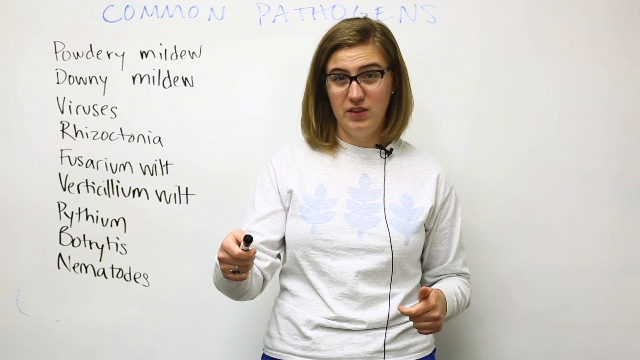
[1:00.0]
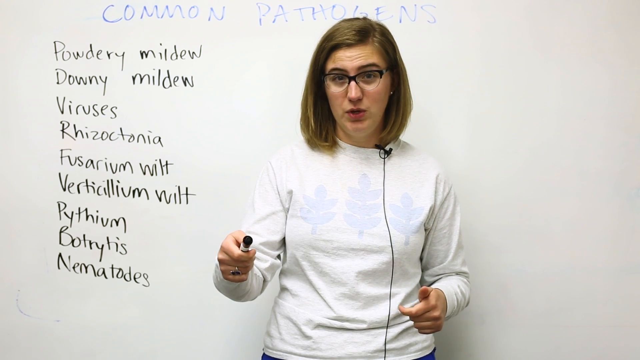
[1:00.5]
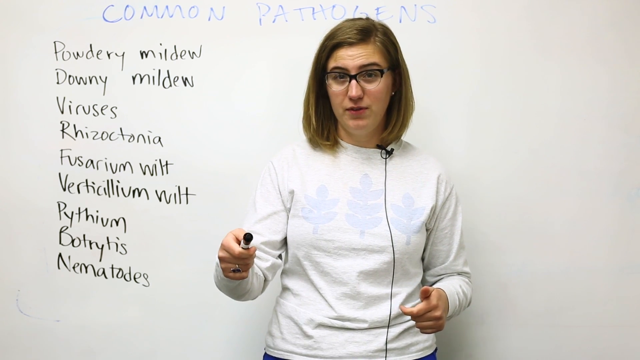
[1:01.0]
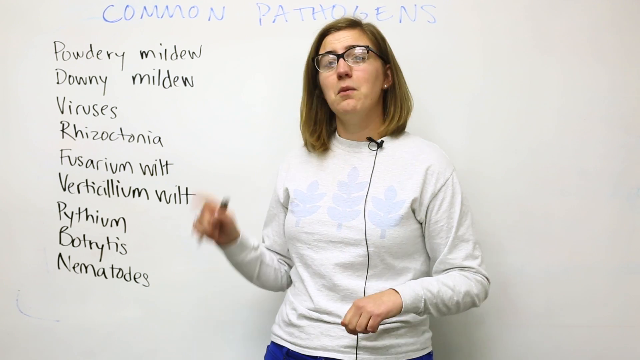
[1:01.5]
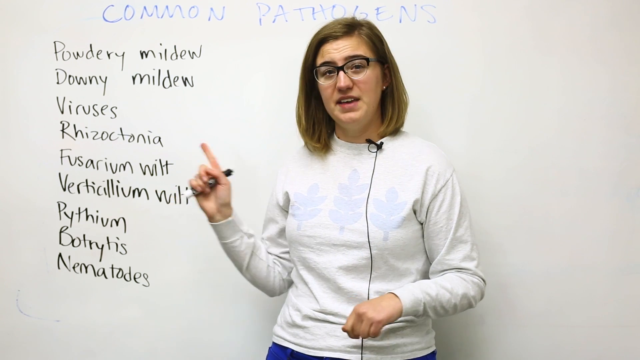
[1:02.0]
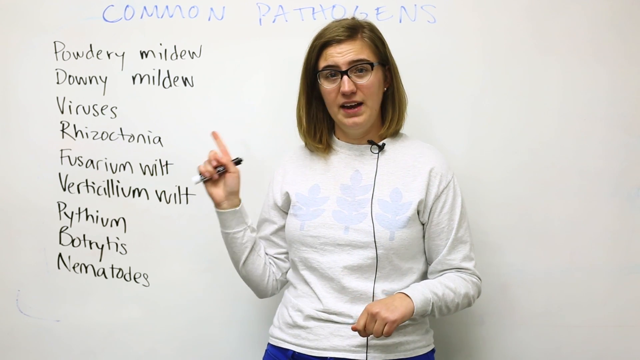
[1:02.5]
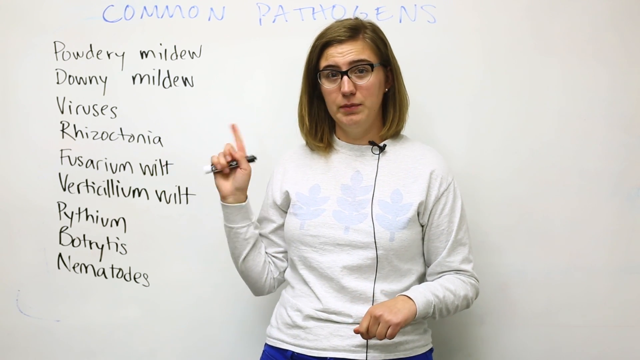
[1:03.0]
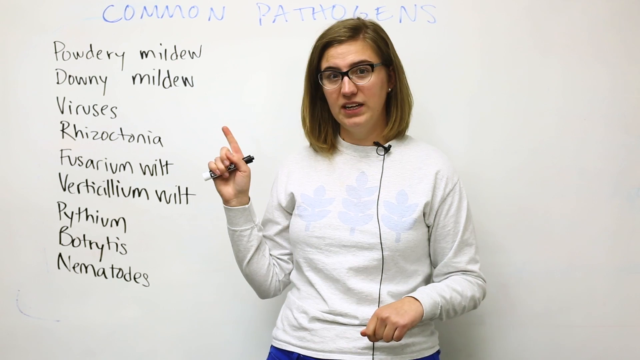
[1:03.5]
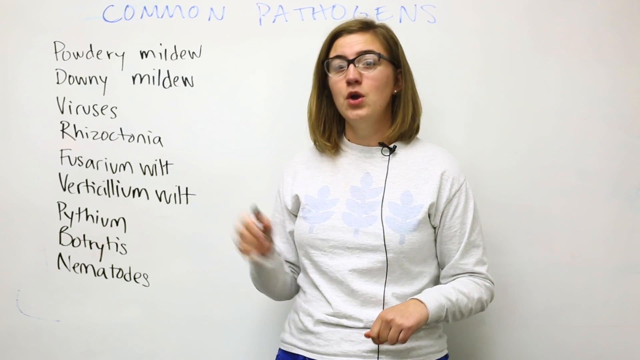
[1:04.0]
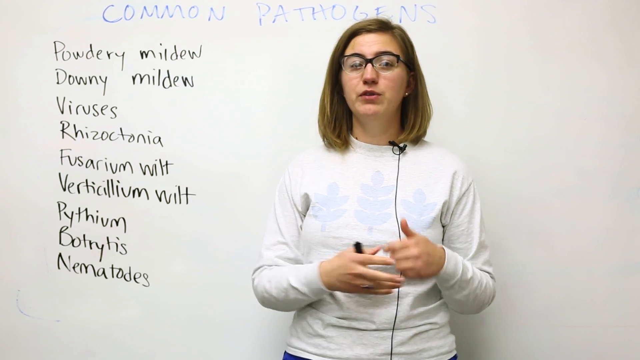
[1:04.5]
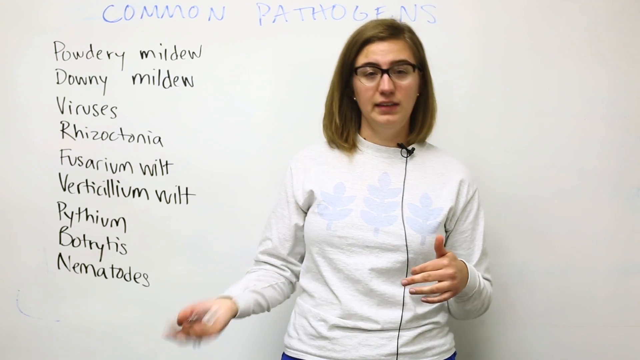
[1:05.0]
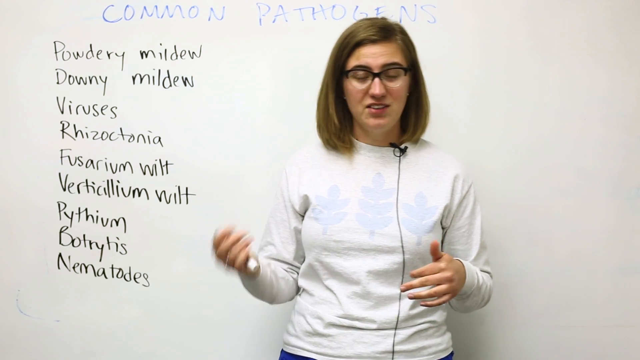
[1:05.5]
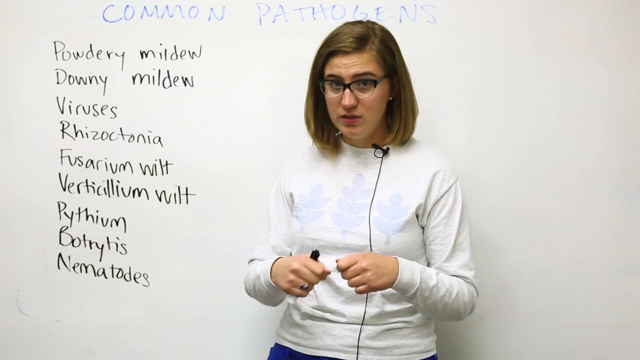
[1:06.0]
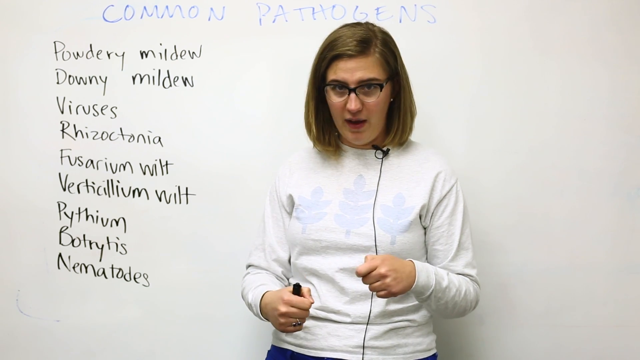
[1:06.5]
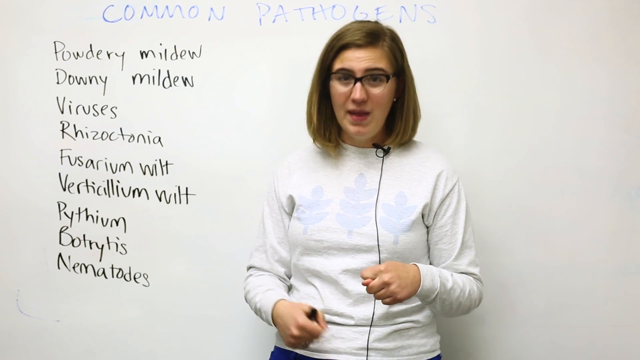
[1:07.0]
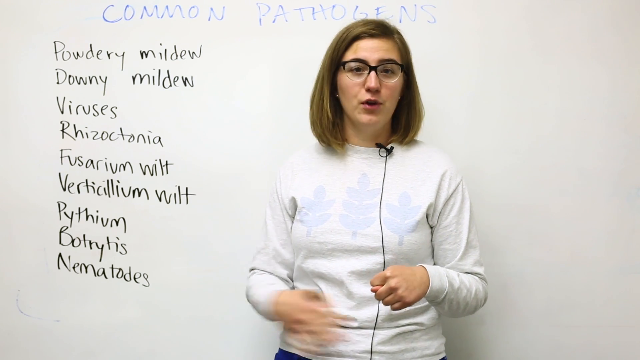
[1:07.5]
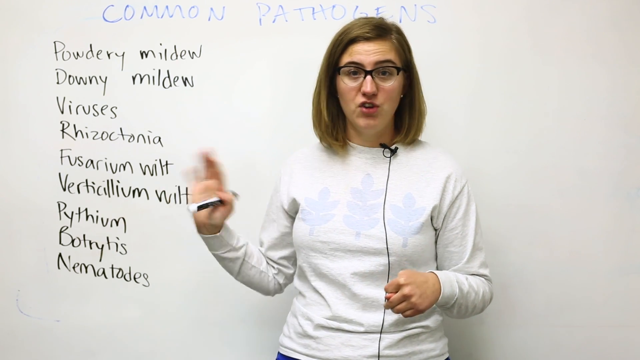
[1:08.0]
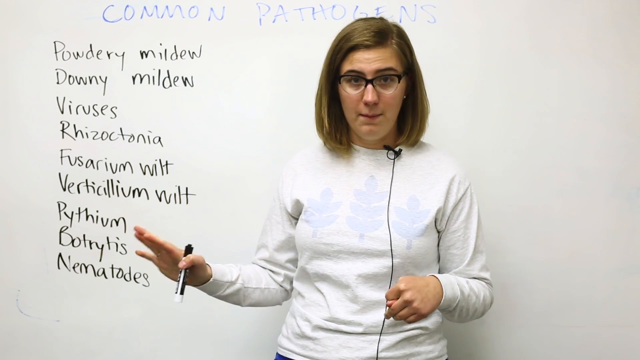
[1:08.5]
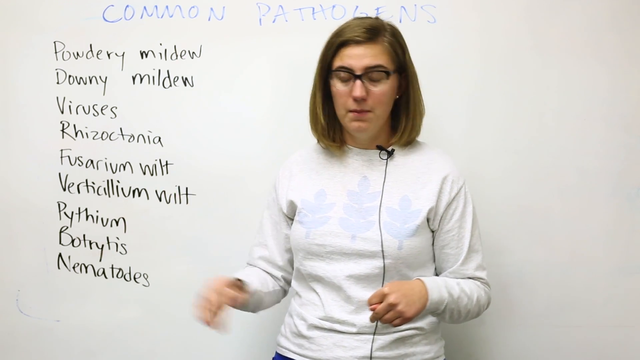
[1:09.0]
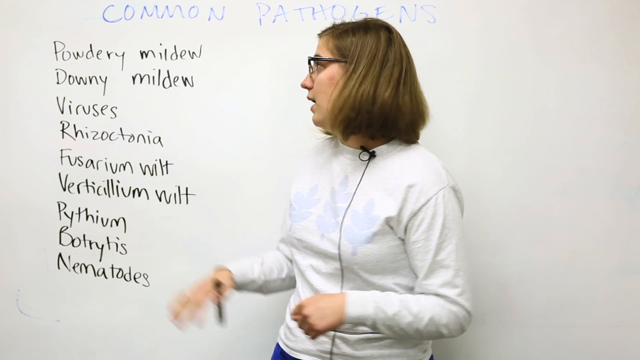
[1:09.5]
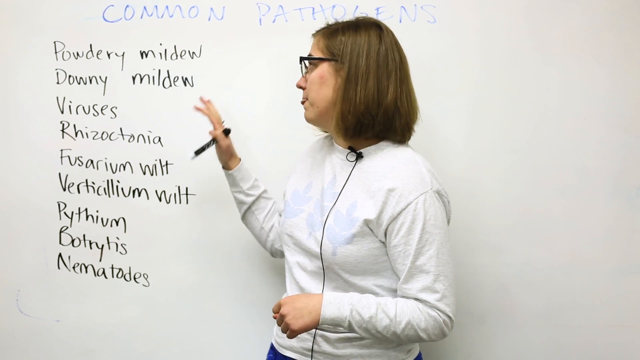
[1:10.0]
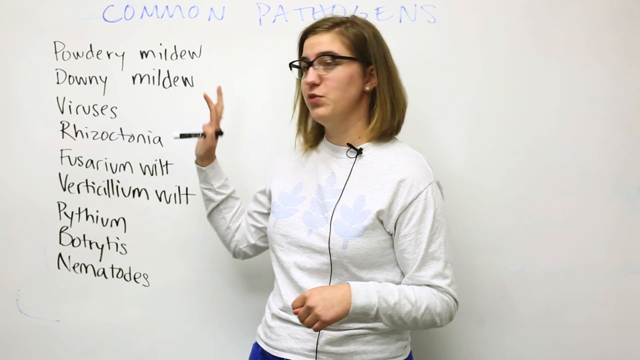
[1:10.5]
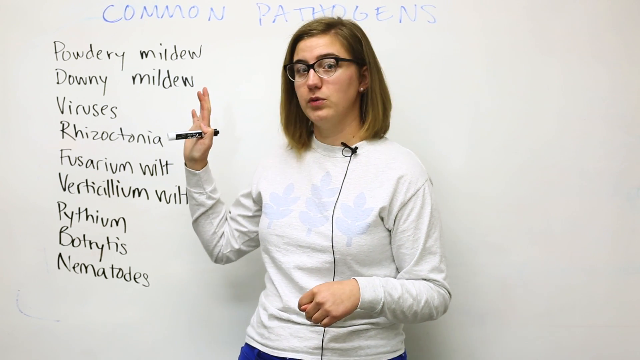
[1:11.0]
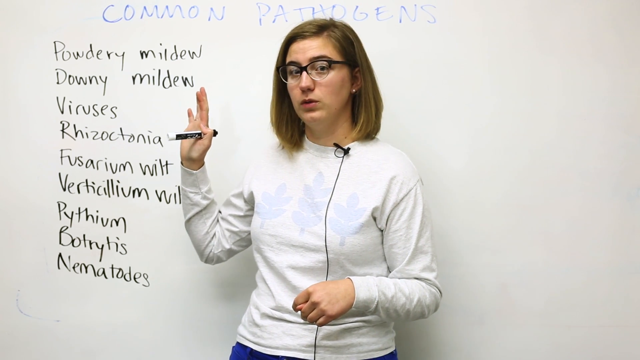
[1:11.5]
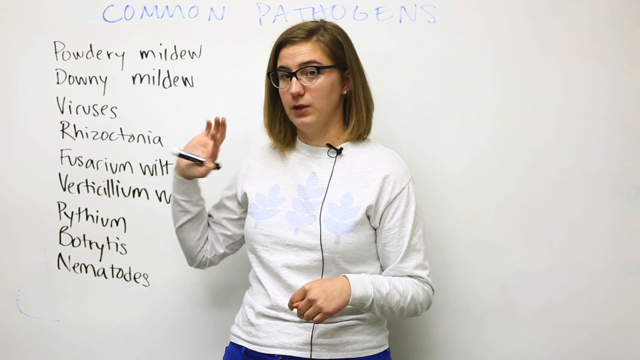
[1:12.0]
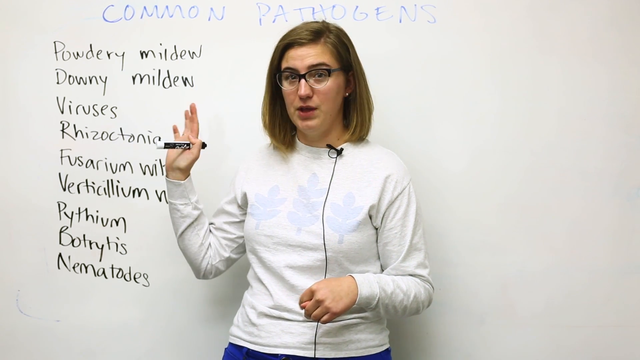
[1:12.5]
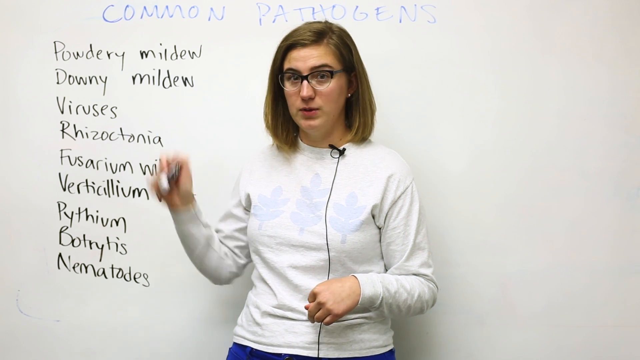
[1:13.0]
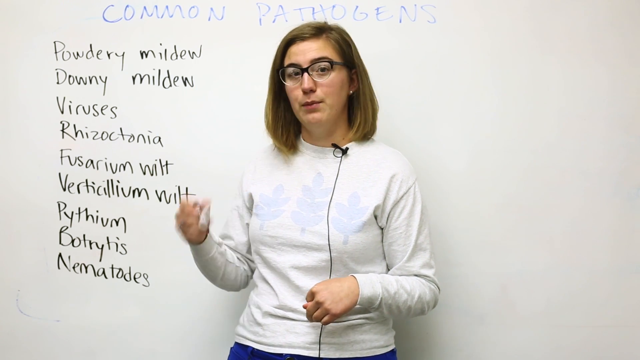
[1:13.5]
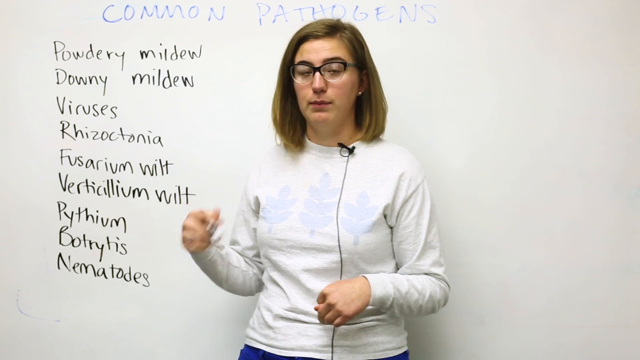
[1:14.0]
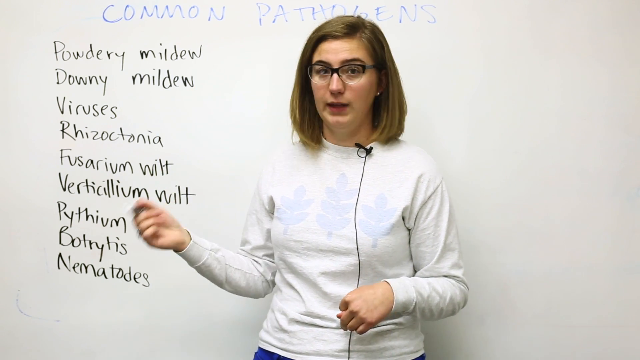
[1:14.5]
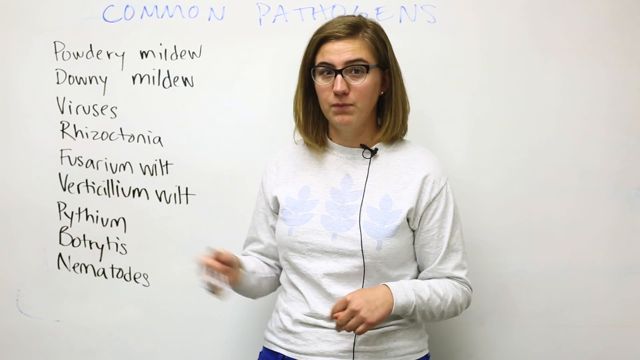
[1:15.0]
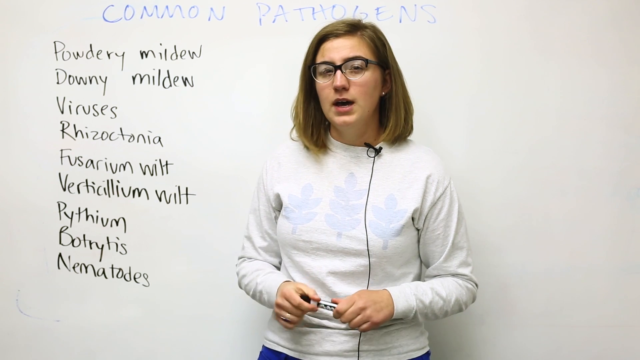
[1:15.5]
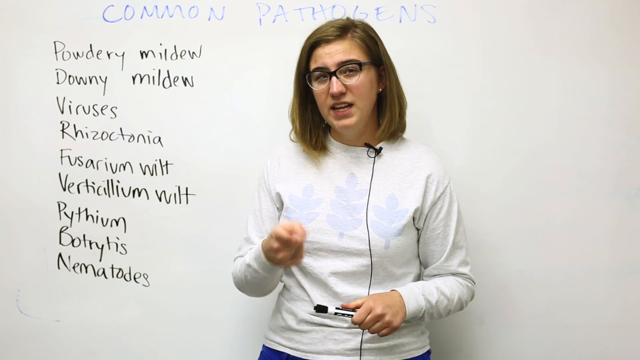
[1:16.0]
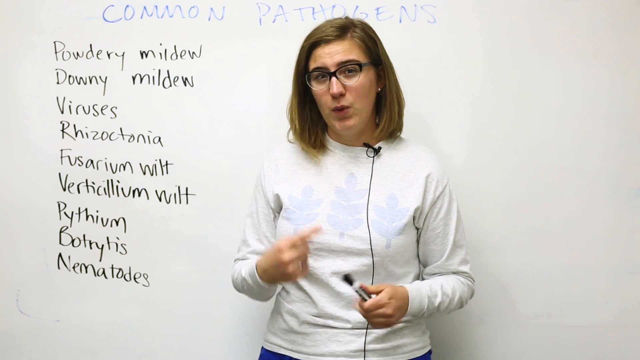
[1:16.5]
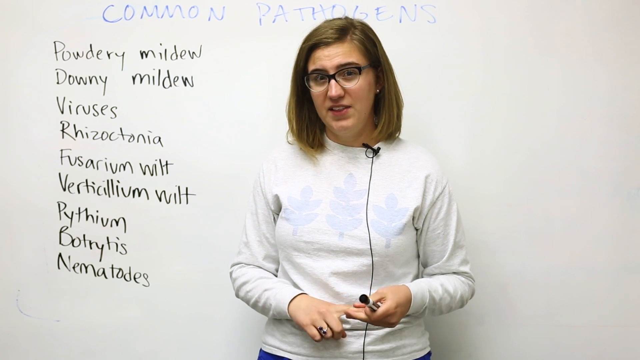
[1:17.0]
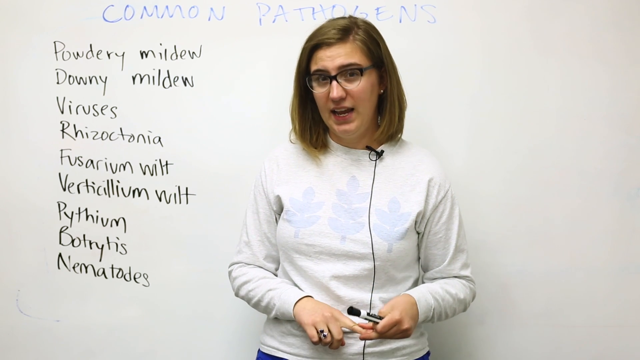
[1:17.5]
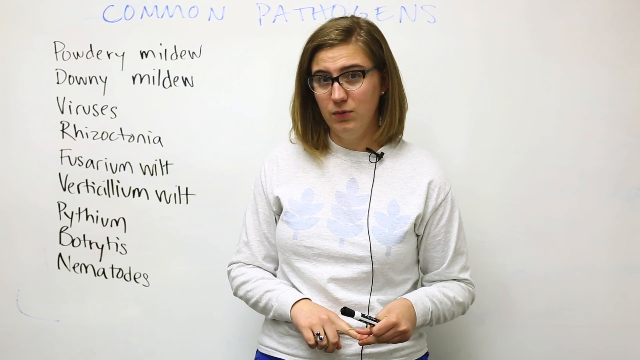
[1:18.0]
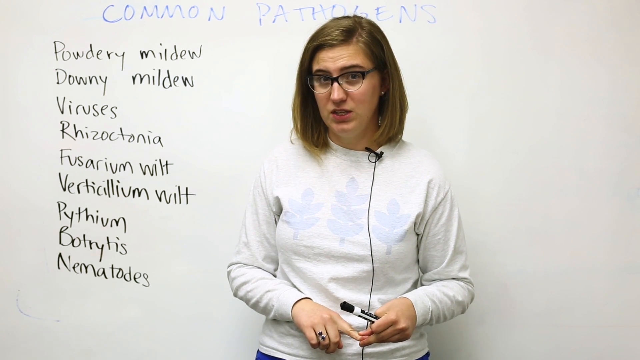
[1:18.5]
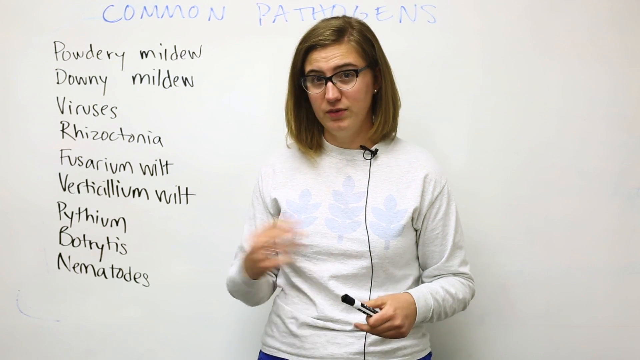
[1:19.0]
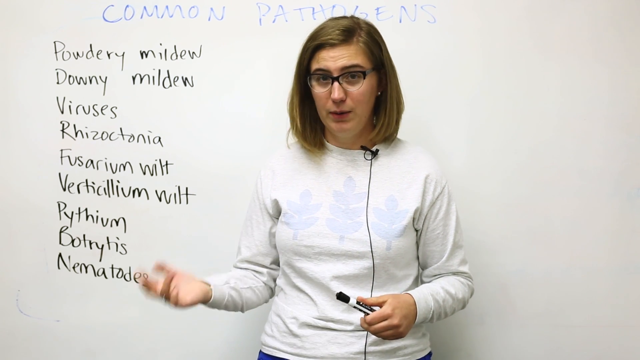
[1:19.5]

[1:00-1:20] A woman stands in front of a whiteboard, talking. At times she points with her right hand to the words written on the whiteboard; at other times she moves her hand around and gestures toward the words. She holds a black dry erase marker and passes it from one hand to the other from time to time while talking. At the top of the whiteboard, in blue dry erase marker, she has written "common pathogens", and below that, in black marker, is a list of several common pathogens, the first few being "powdery mildew", "downy mildew" and "viruses", with several others listed beneath. She wears a long-sleeved white shirt with a black microphone clipped to the collar; its cord runs down the front of her shirt and toward the ground. She has medium-length brown hair that touches her shoulders and wears glasses.